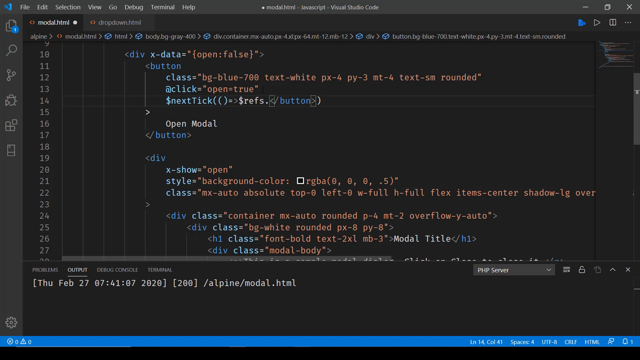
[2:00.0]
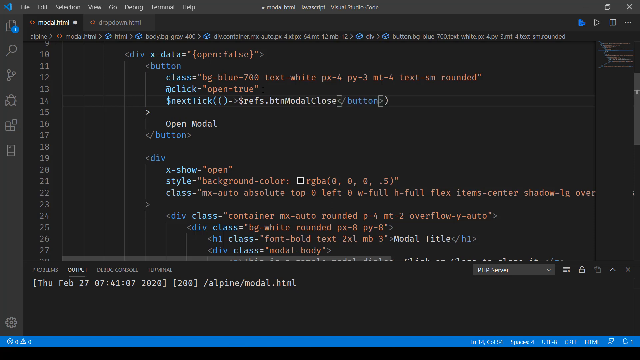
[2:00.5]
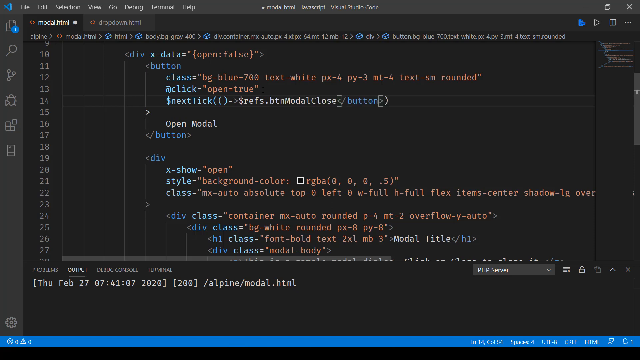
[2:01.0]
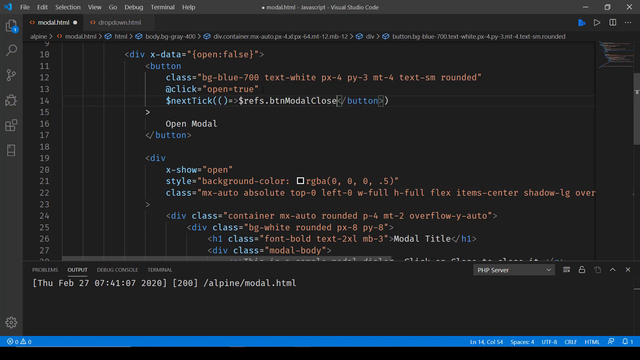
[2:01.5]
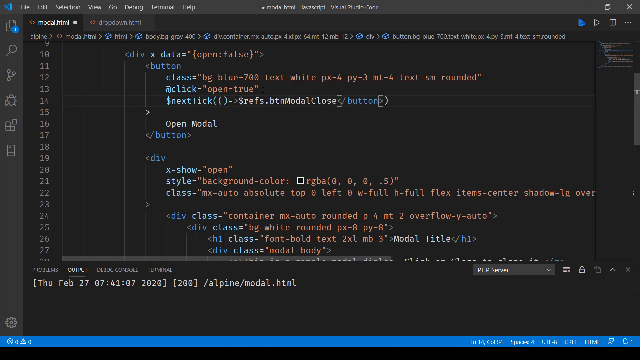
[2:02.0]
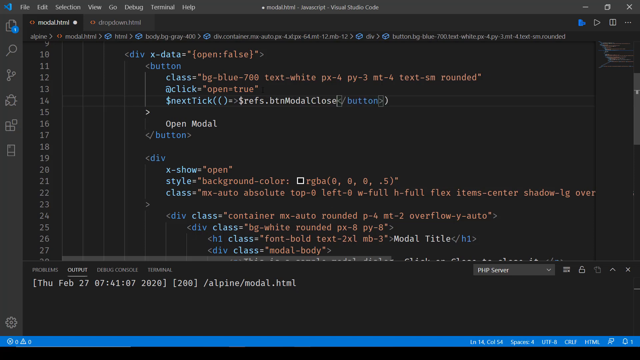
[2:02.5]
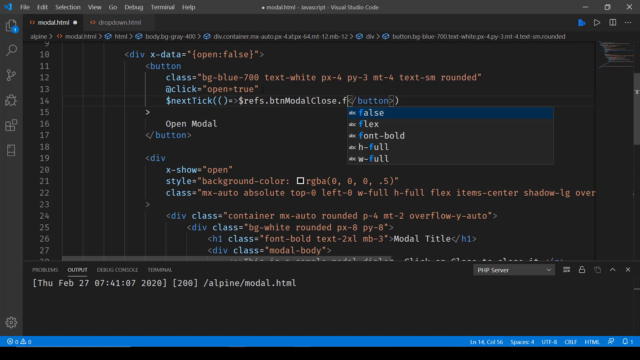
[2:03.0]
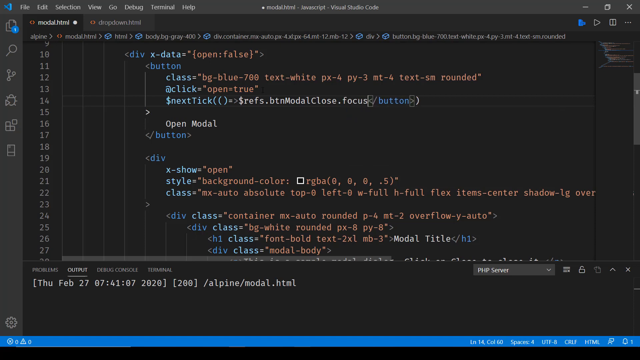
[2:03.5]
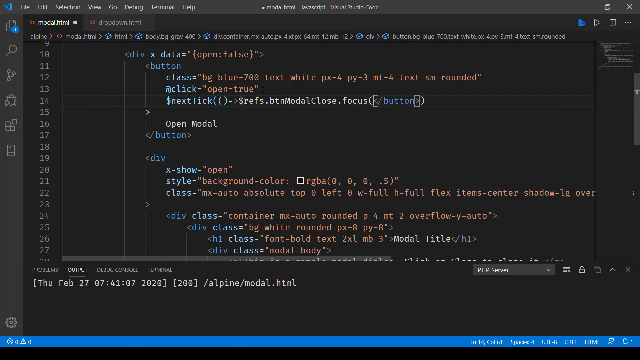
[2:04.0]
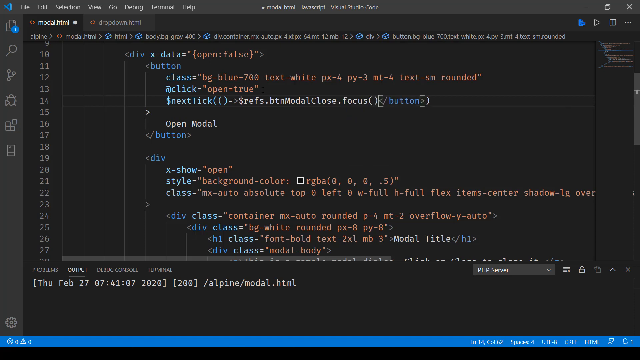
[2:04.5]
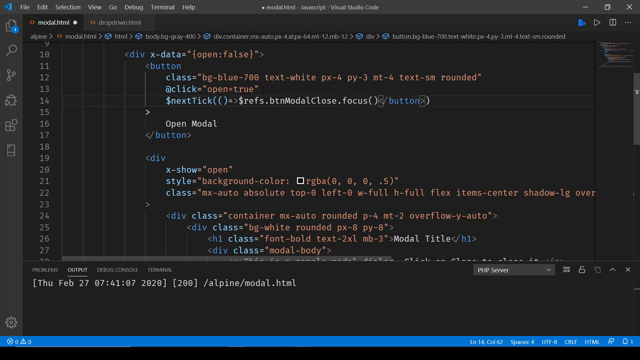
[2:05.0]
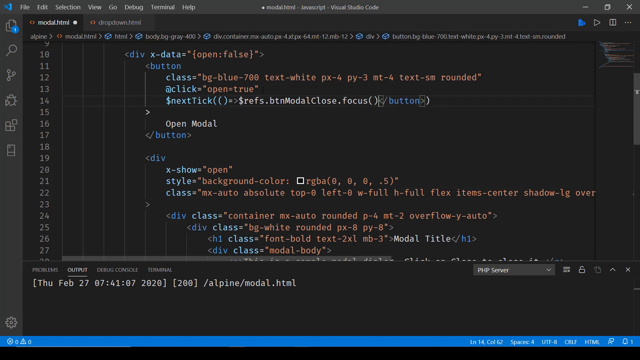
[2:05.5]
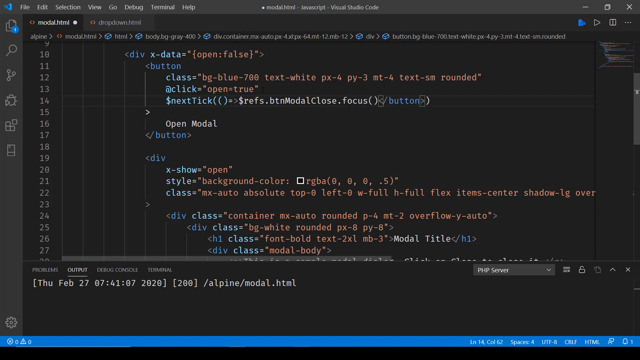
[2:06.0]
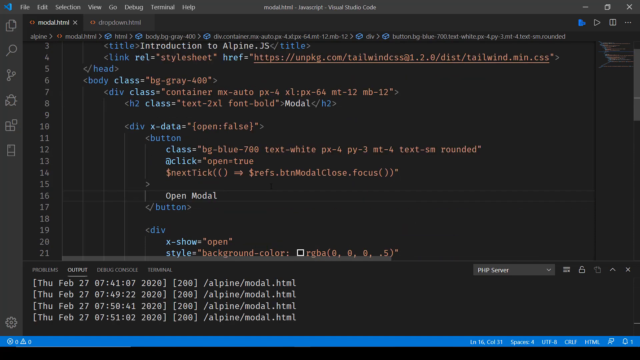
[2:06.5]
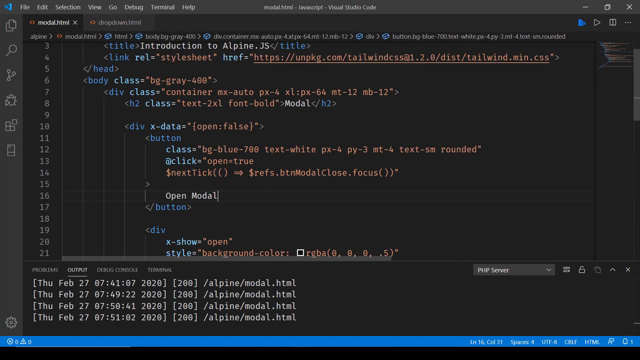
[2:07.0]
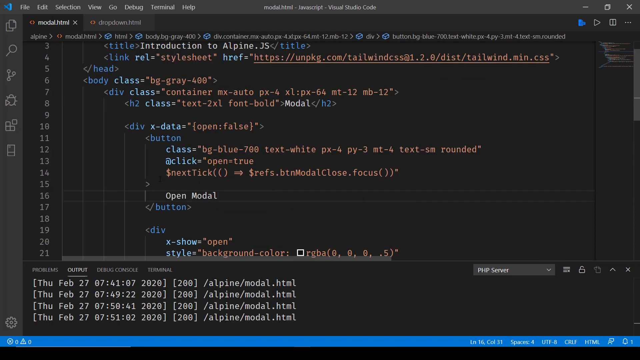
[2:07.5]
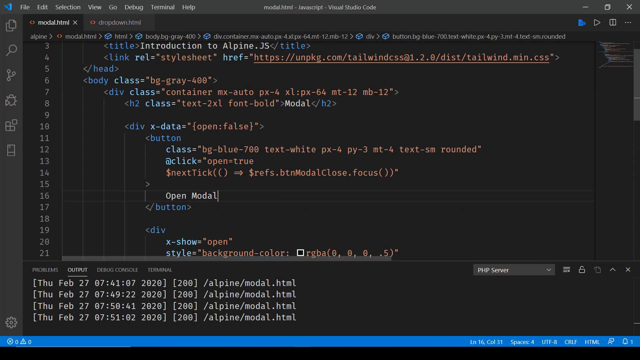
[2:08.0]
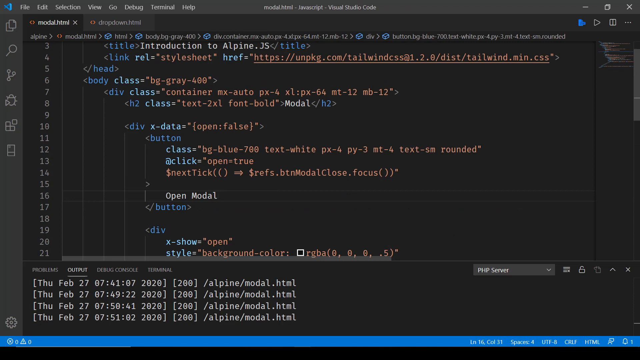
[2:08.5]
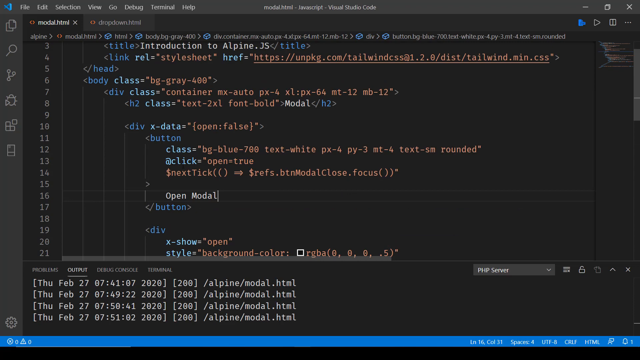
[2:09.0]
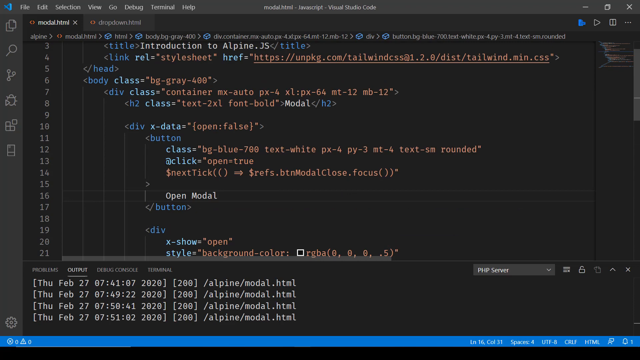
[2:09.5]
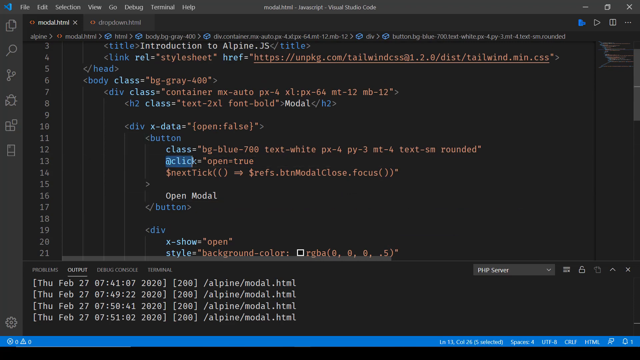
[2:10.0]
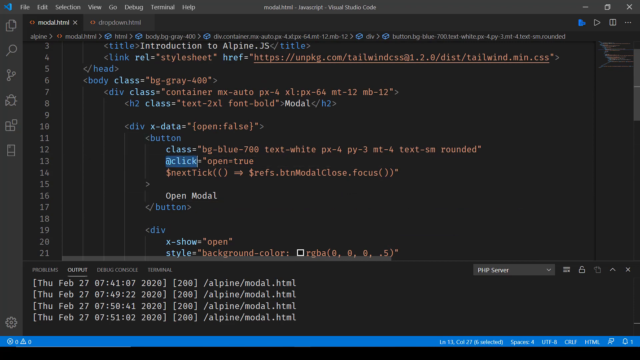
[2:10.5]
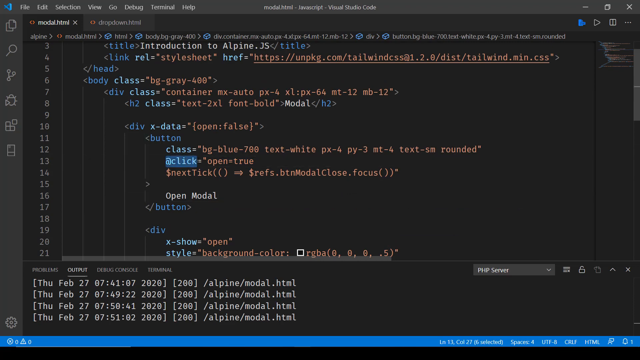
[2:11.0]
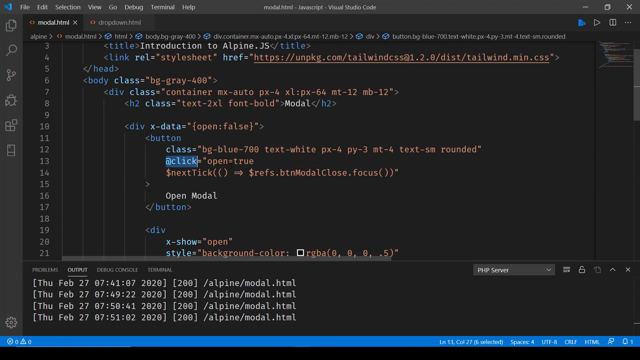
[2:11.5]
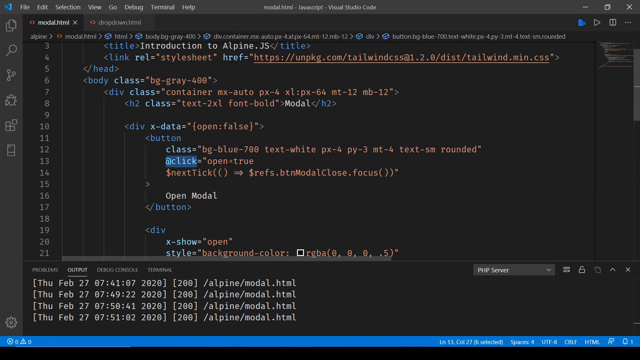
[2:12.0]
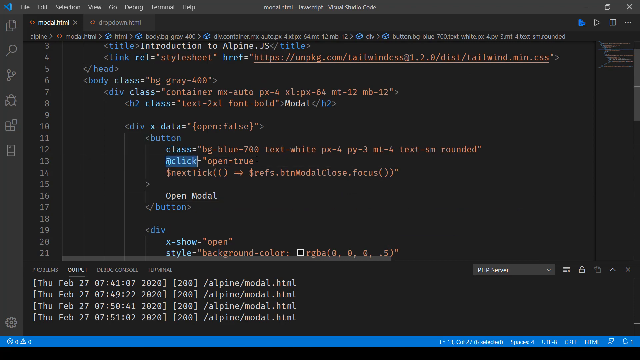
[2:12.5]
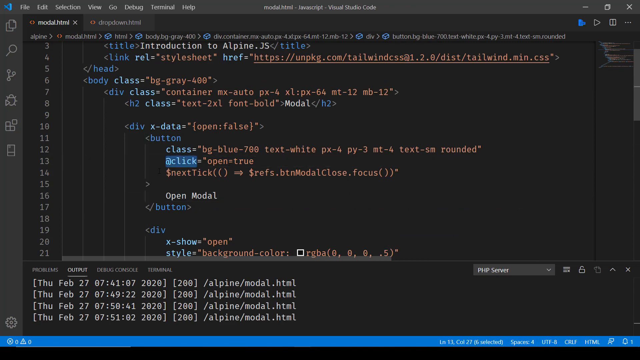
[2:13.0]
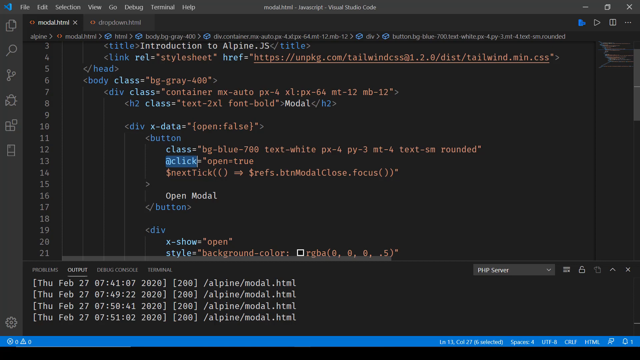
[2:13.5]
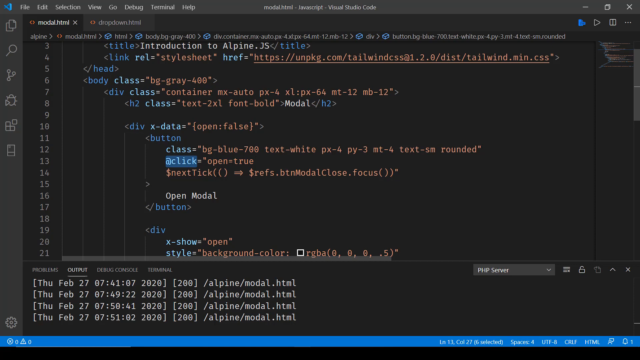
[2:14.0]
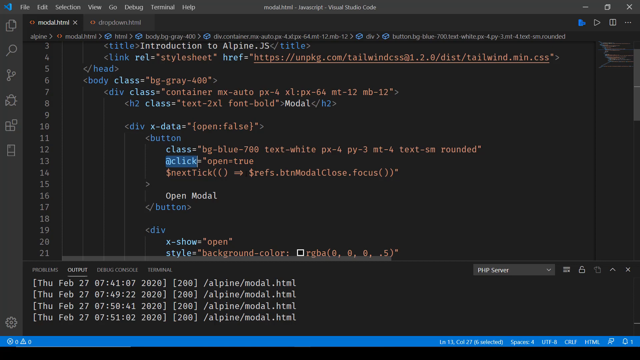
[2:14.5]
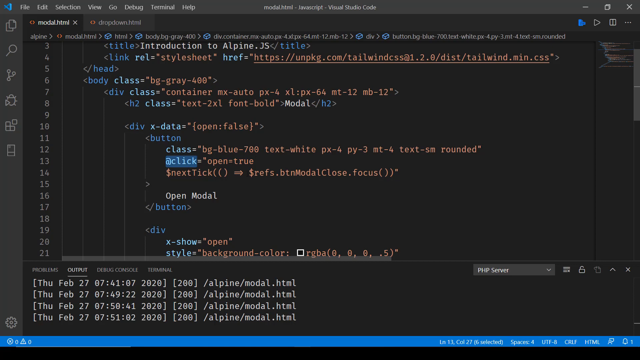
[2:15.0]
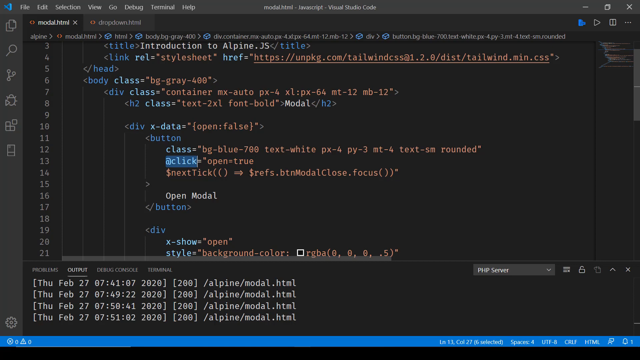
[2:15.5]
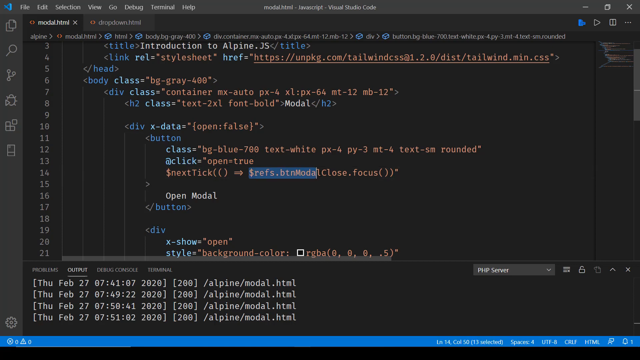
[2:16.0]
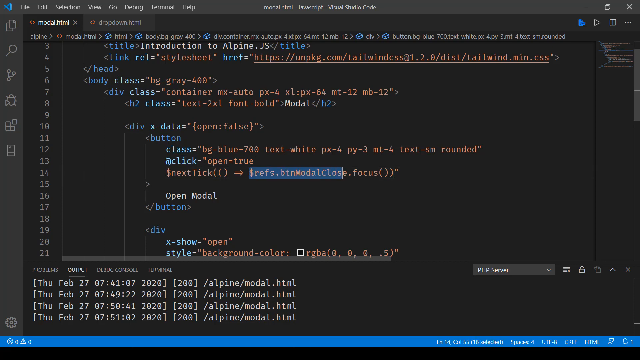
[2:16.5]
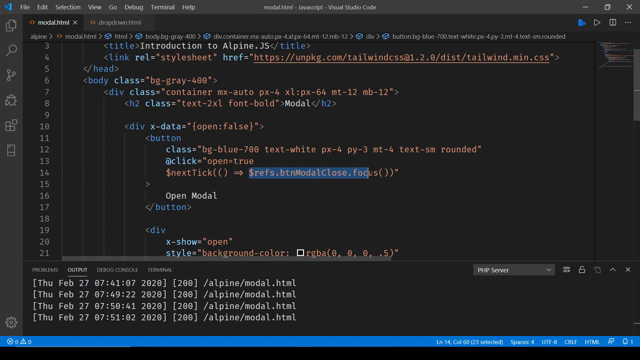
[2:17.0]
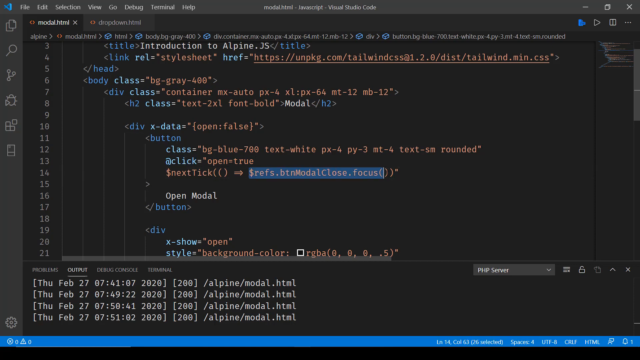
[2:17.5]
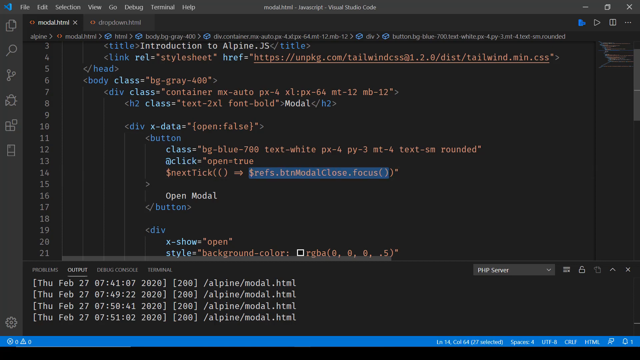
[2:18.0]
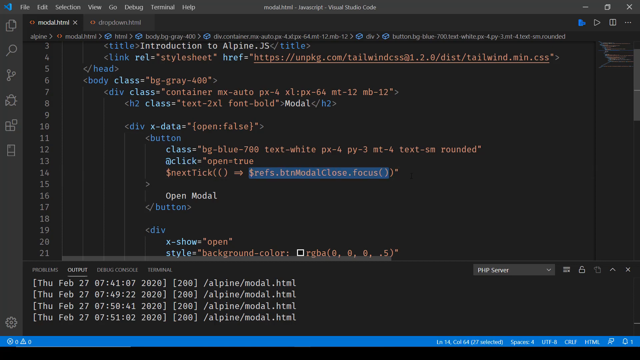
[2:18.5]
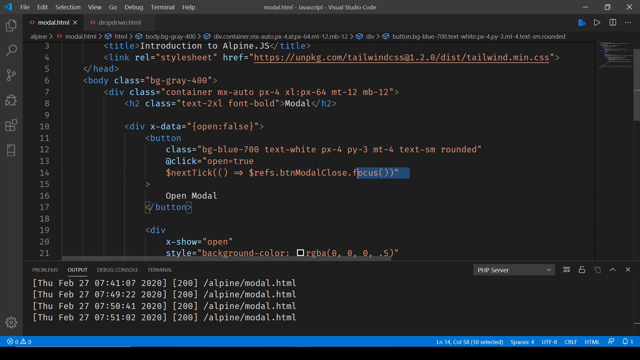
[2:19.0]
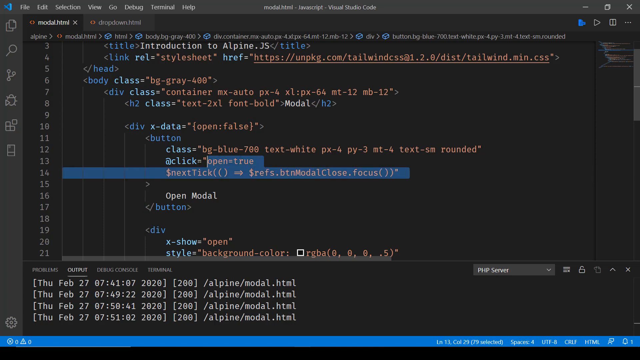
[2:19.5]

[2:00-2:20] The user edits the next tick code, which seems to be a reference tick. A line reading reference button modal close .focus appears, apparently related to the modal code. This code is a different color from the type, changing from white to orange when it is added.